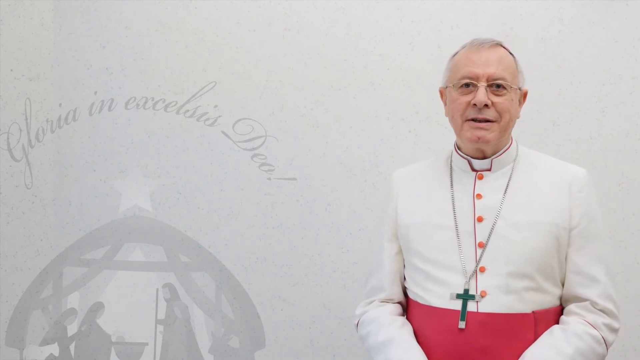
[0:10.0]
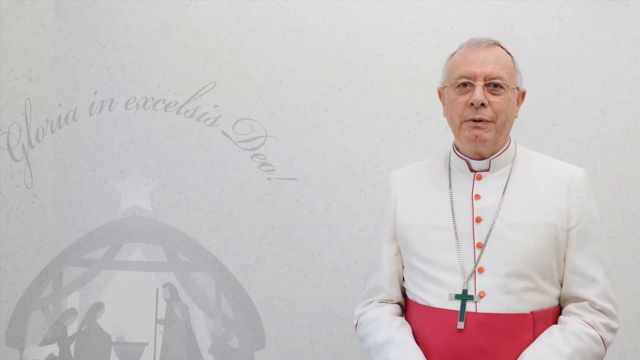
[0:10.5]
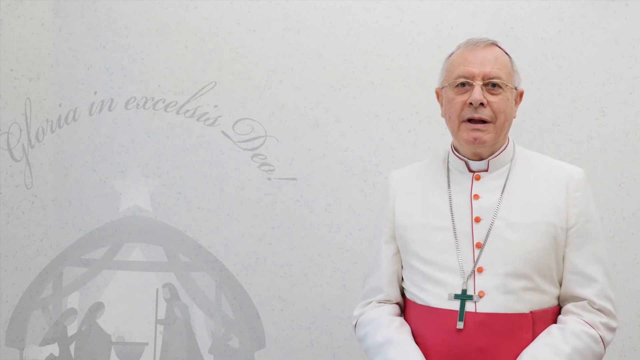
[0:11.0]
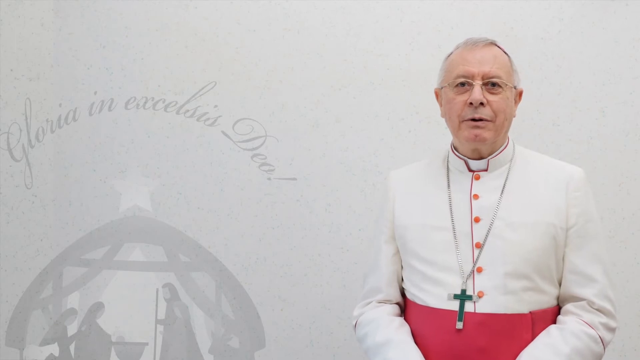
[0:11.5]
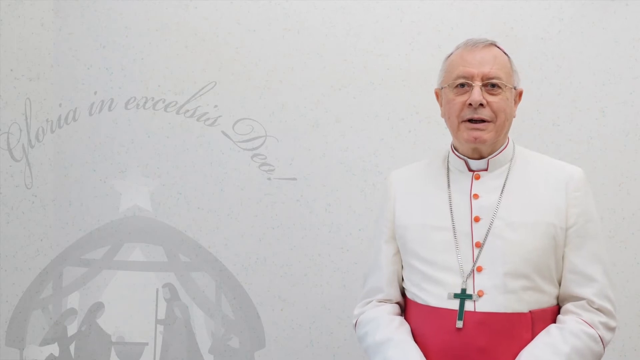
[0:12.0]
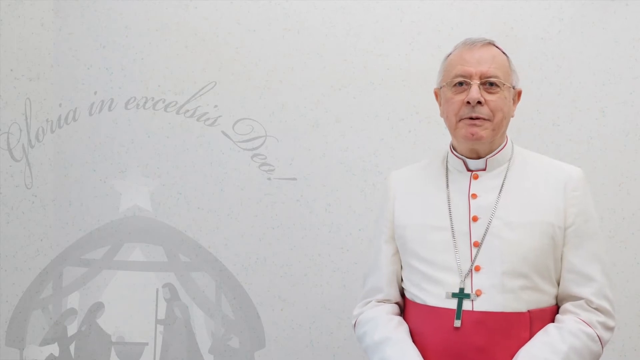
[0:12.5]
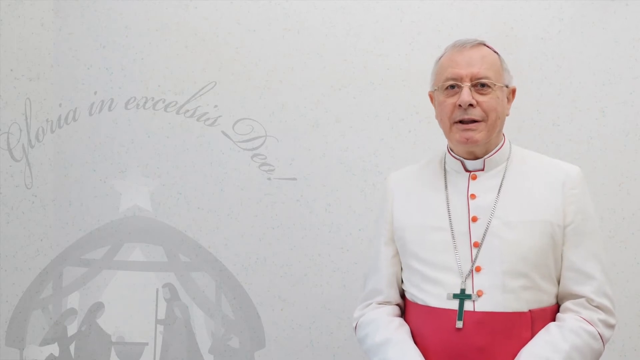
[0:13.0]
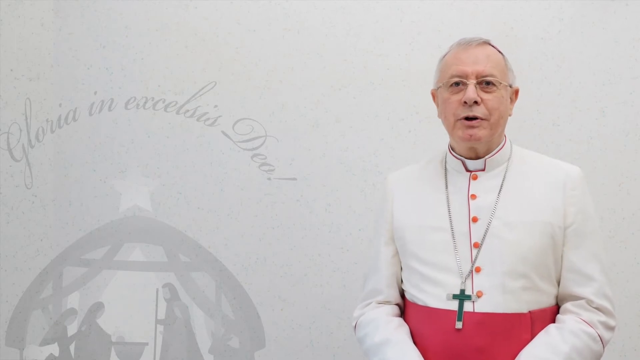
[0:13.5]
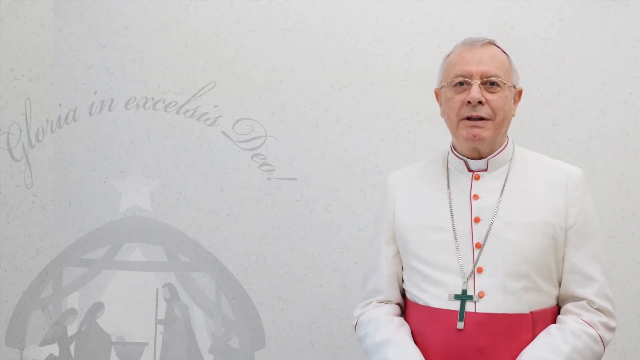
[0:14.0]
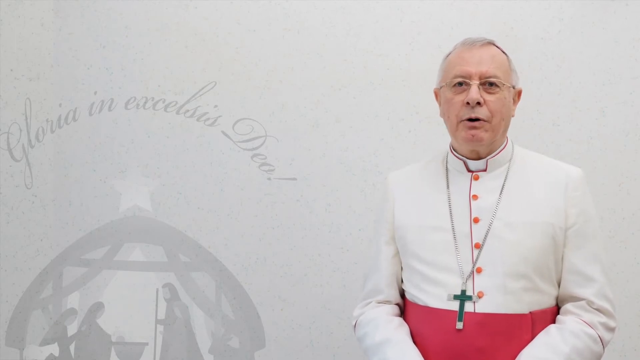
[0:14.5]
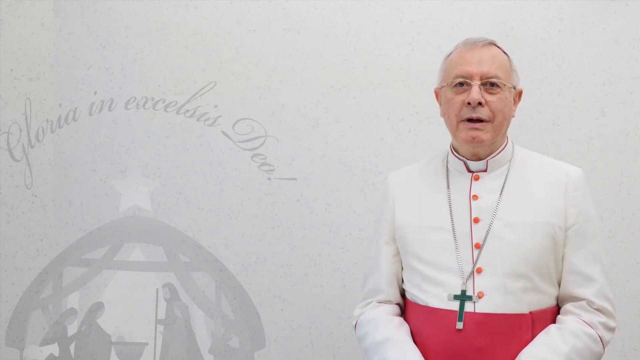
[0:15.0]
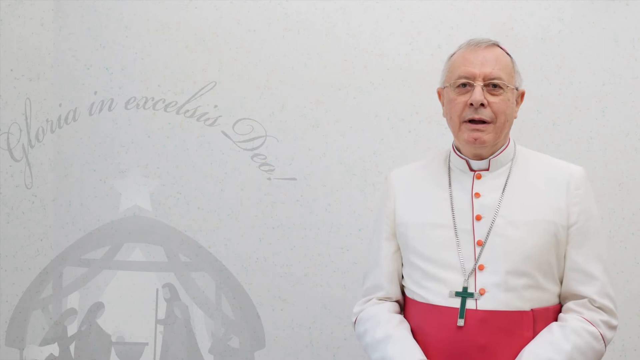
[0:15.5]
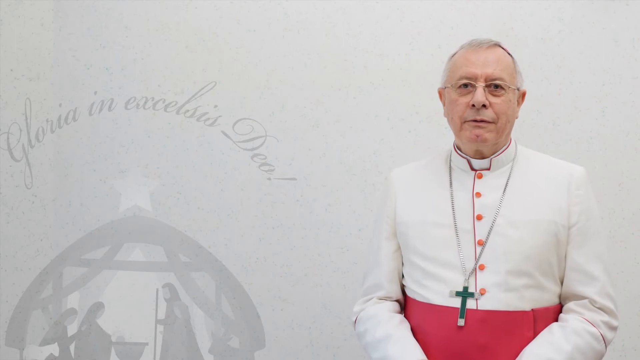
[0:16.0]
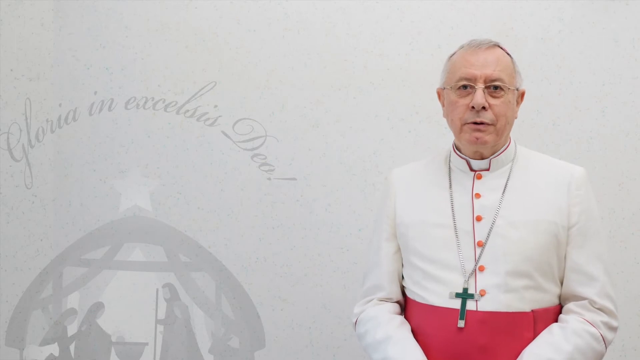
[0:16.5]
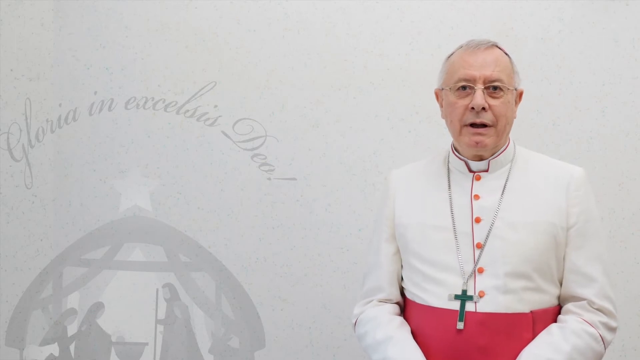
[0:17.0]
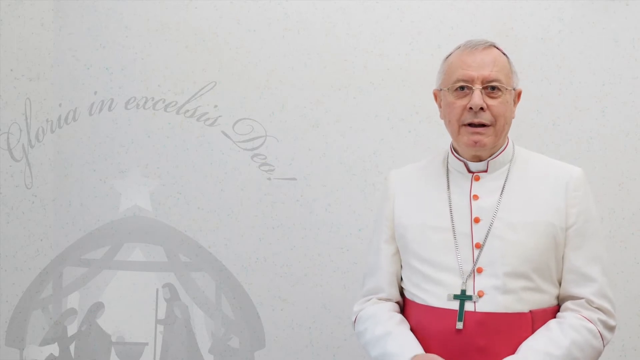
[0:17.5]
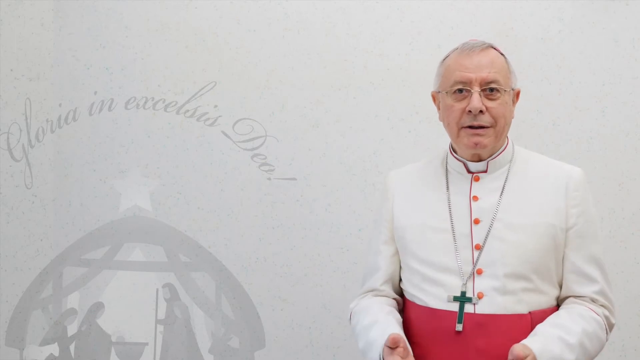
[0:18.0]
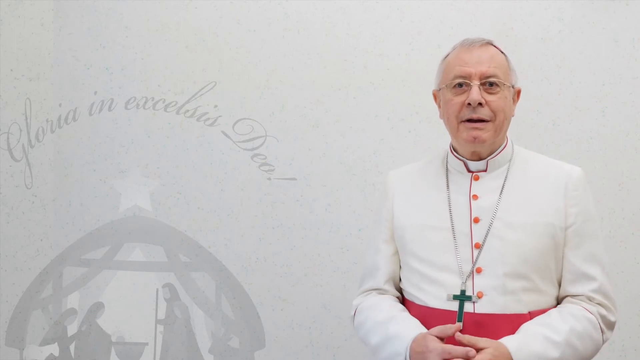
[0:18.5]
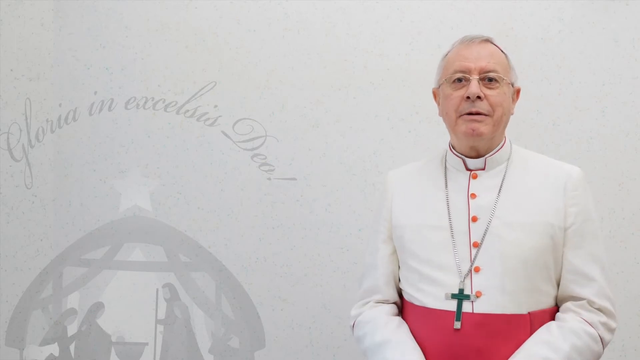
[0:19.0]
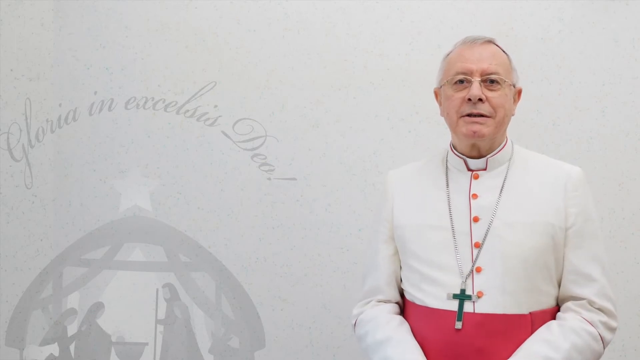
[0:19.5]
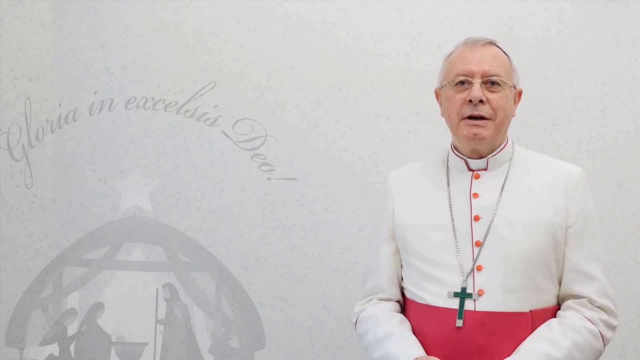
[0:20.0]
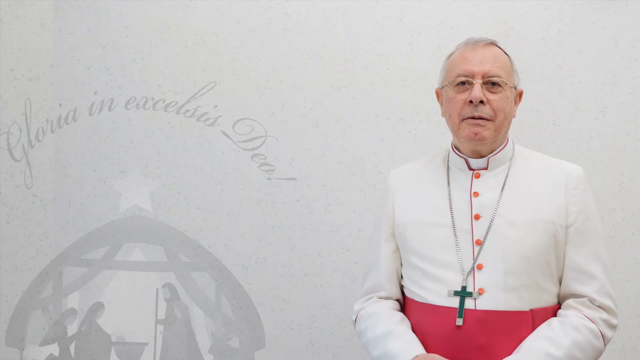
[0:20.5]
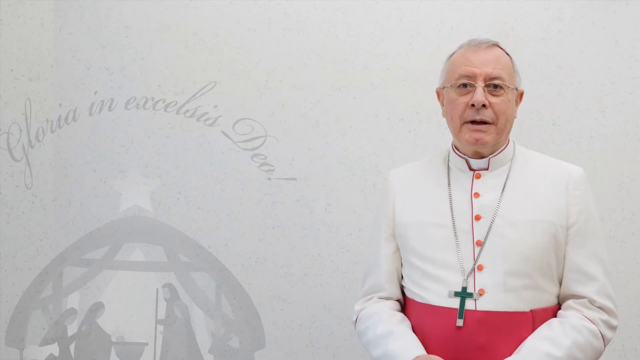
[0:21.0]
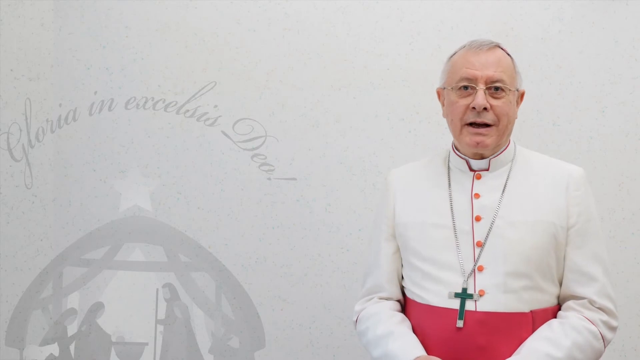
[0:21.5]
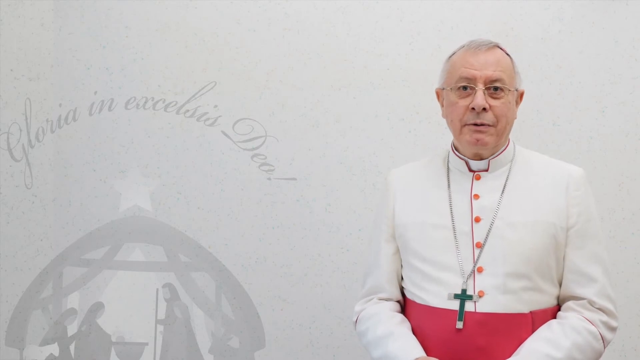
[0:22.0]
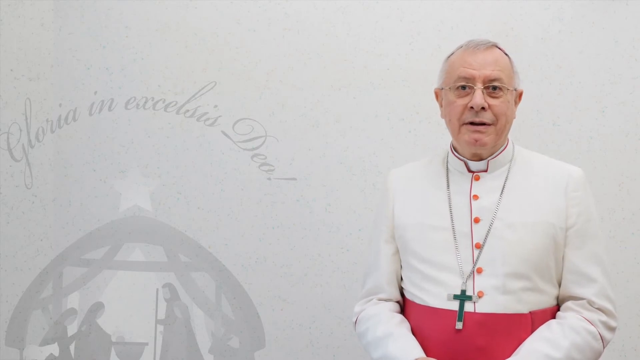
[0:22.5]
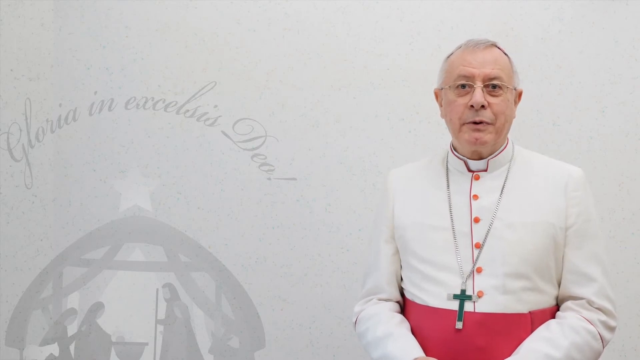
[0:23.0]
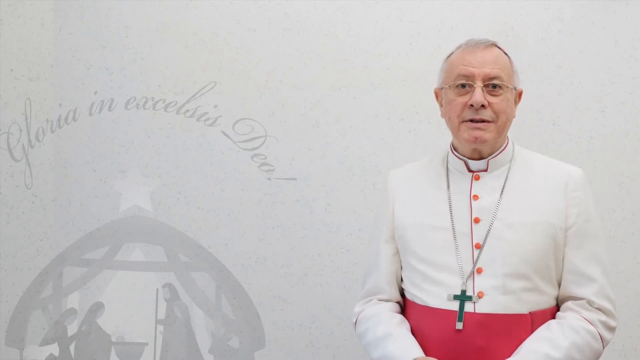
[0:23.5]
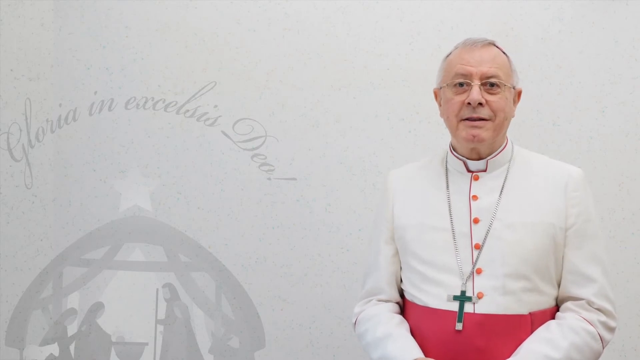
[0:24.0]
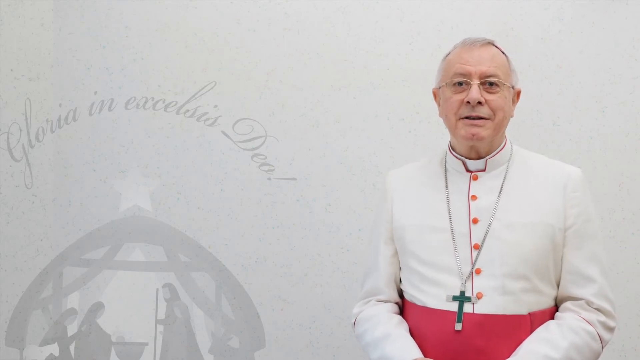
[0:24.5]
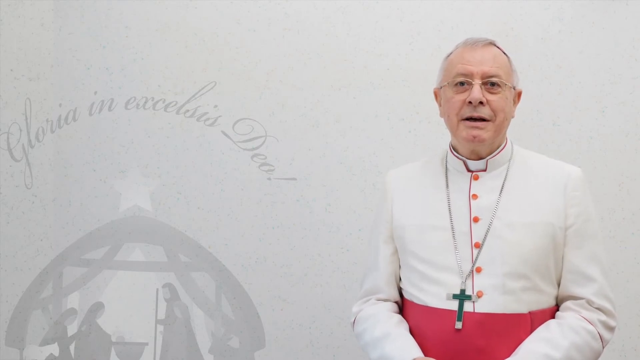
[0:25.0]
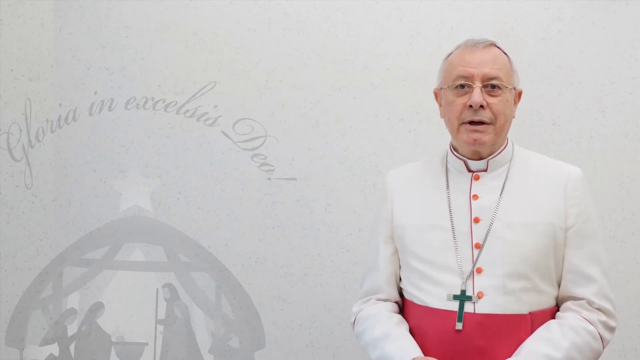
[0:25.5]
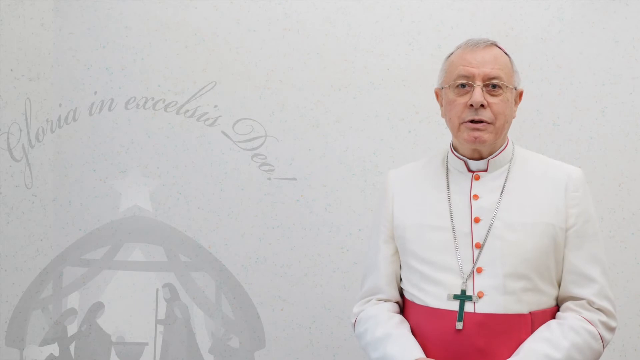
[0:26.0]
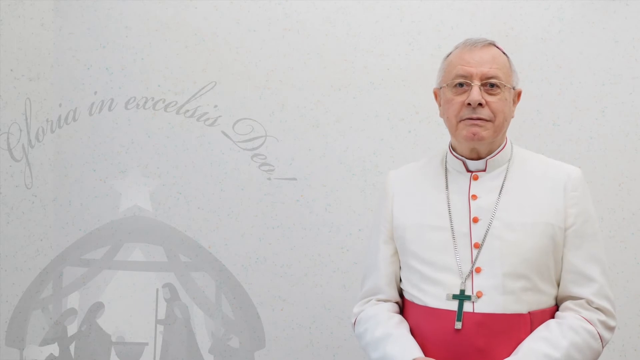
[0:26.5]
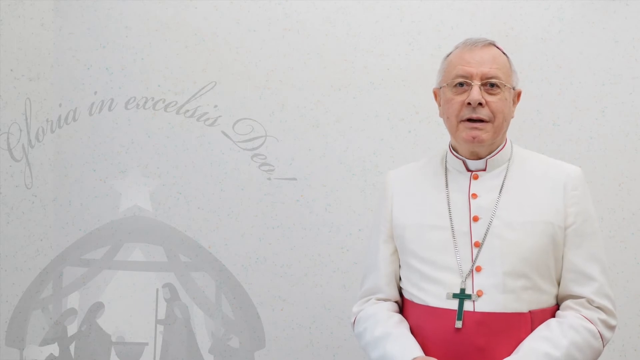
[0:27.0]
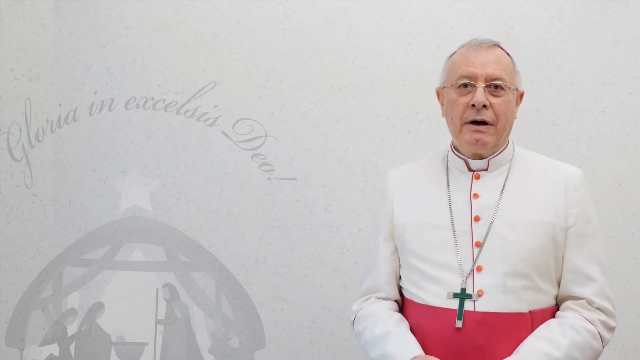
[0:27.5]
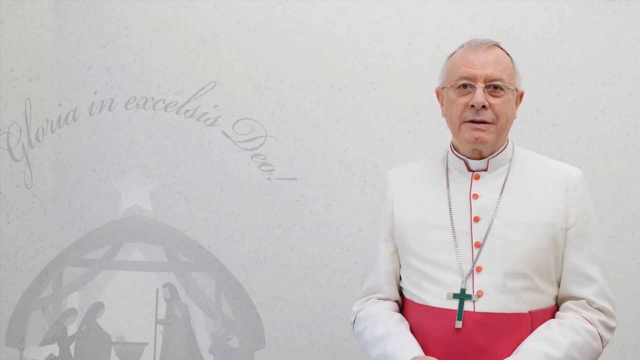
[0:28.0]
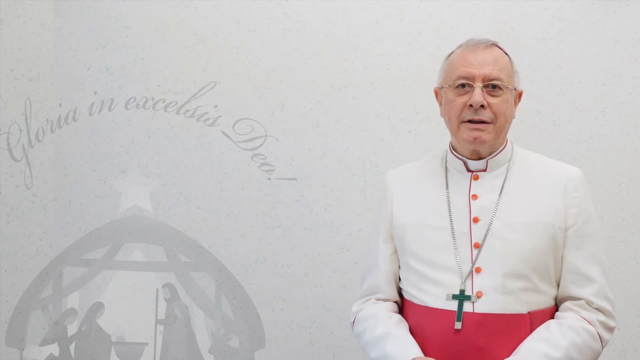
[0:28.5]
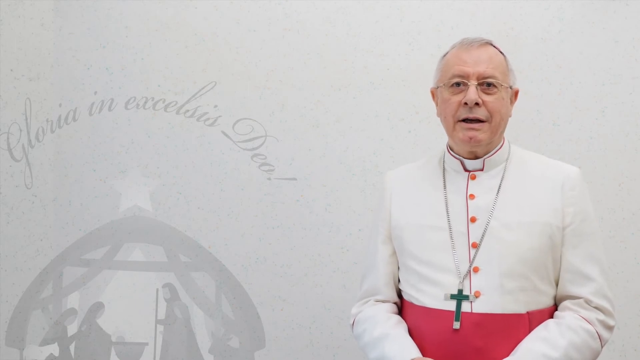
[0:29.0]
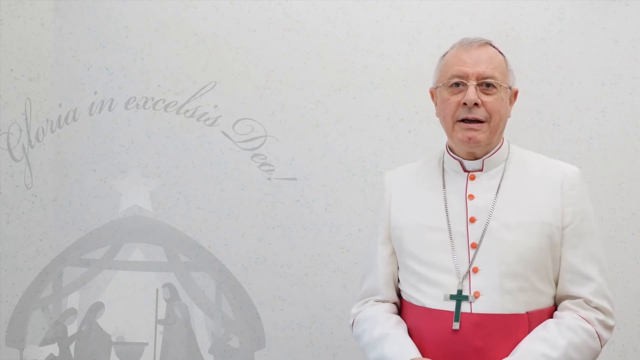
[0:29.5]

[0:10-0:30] A man dressed as a priest stands at the right side of the frame. Around his neck is a chain with what appears to be a green-looking cross. He wears glasses and looks directly ahead as he speaks. To his left is some writing, and under it is a picture of the nativity scene with a star above it. As he talks, he has a slight smile and his arms move slightly. There is something upon his head, and his white garment has a light red or pink belt around the waist and light red or pink buttons going downward in the middle.